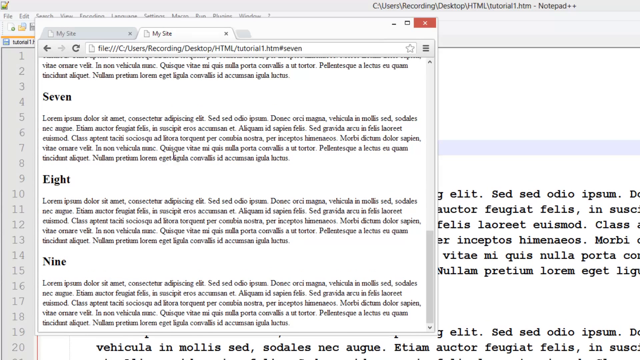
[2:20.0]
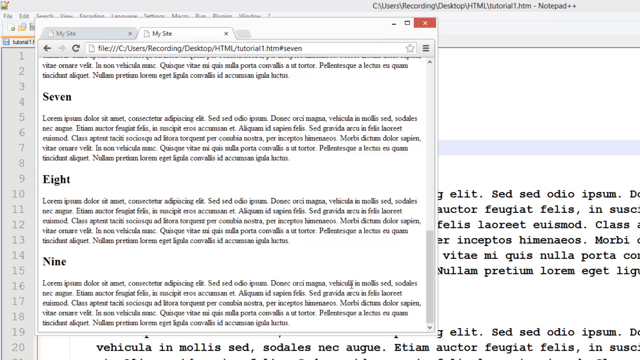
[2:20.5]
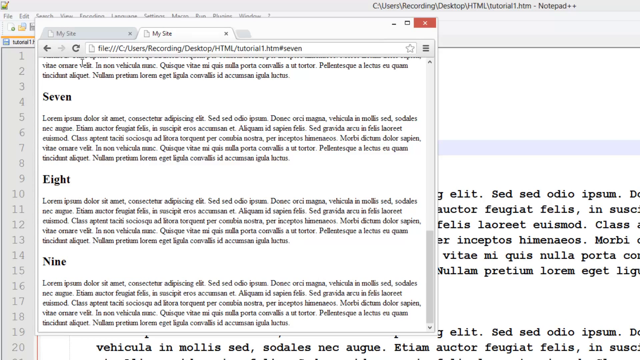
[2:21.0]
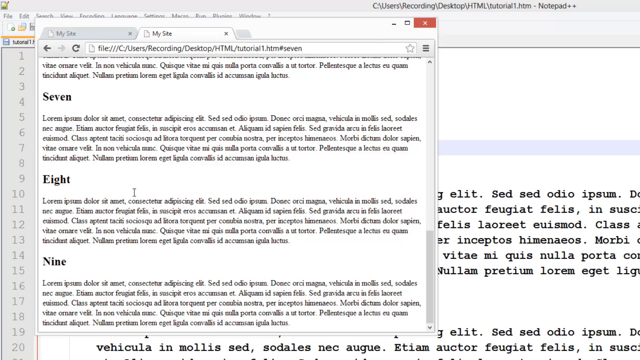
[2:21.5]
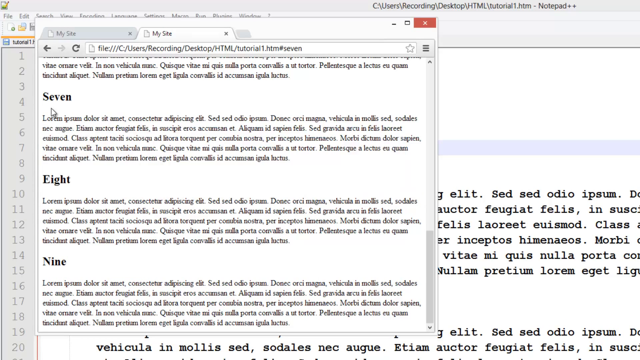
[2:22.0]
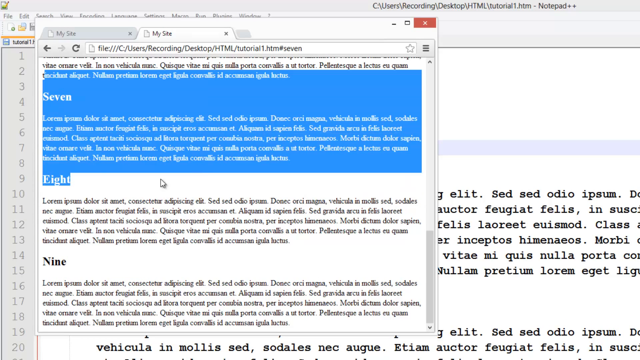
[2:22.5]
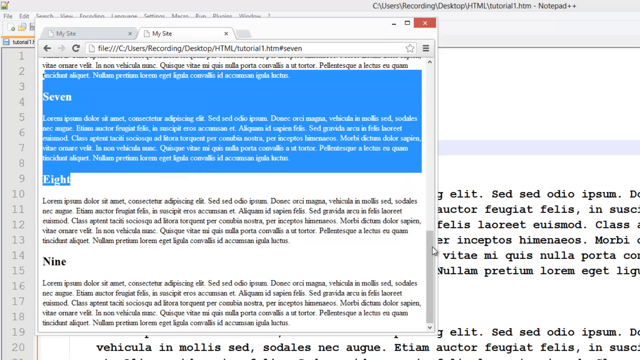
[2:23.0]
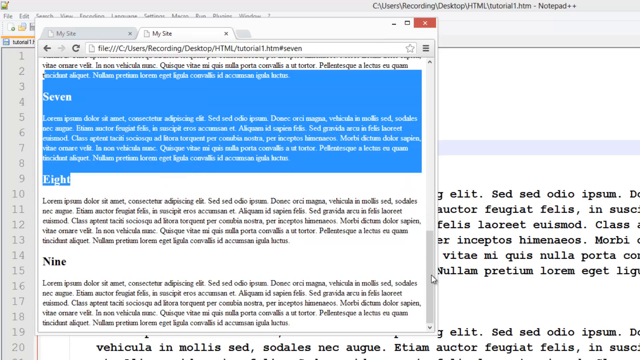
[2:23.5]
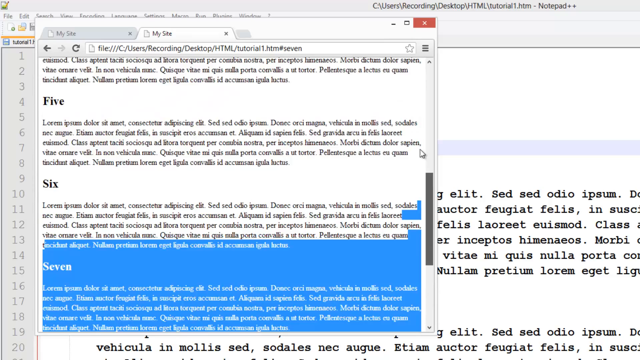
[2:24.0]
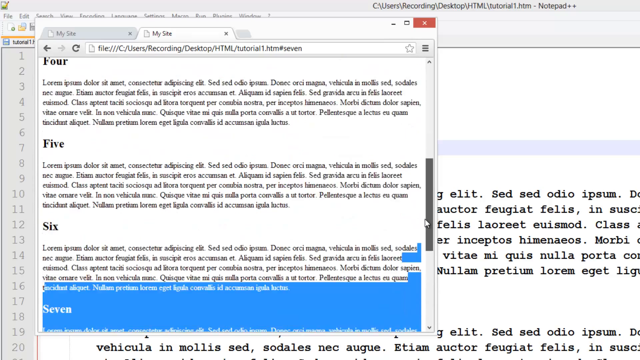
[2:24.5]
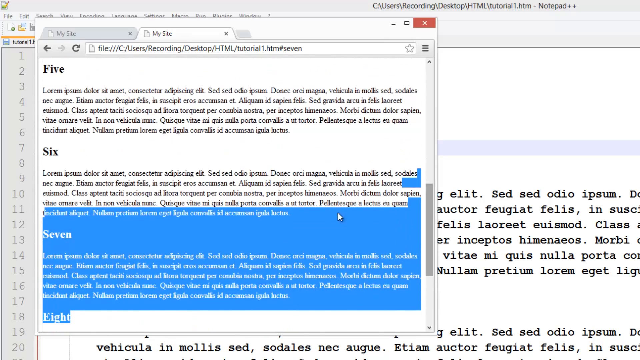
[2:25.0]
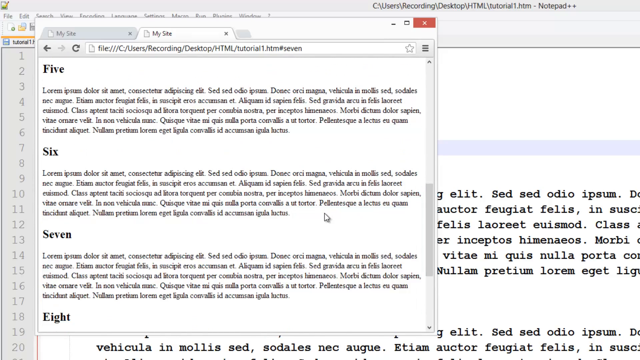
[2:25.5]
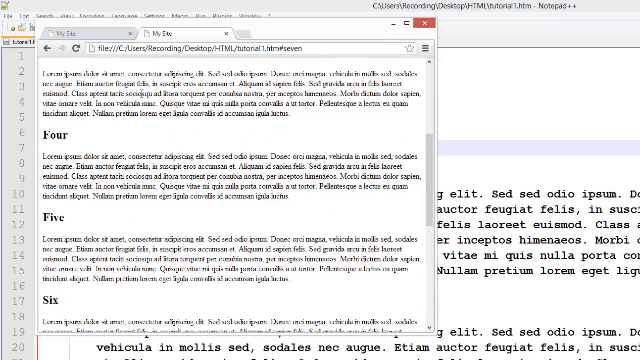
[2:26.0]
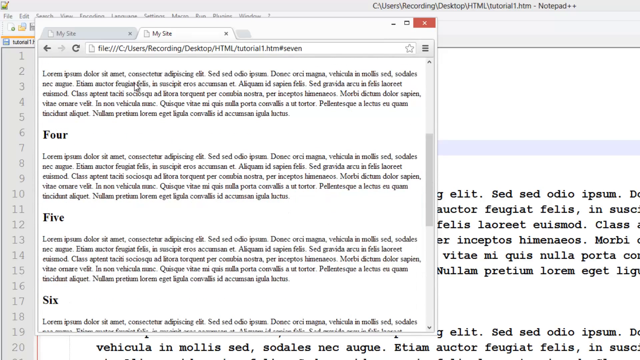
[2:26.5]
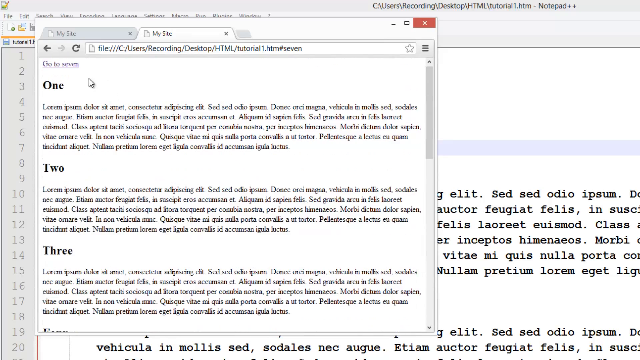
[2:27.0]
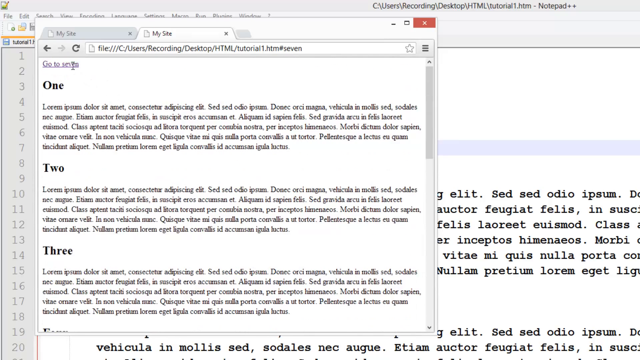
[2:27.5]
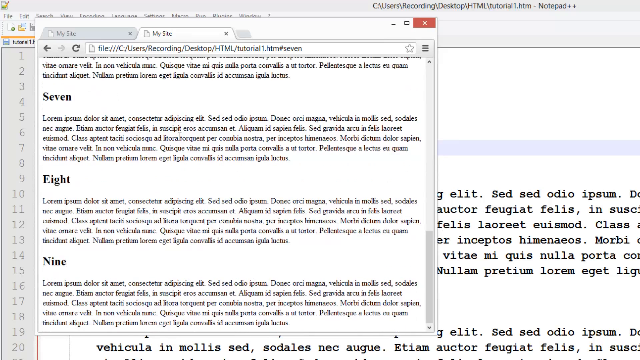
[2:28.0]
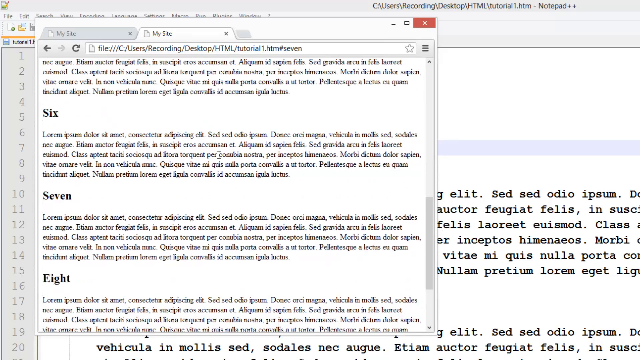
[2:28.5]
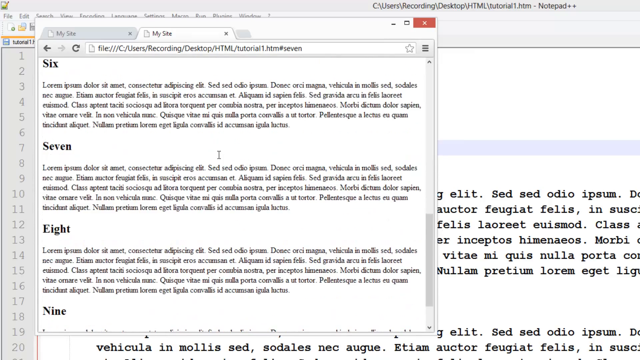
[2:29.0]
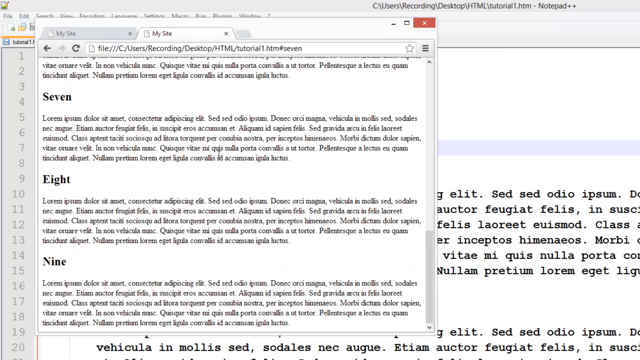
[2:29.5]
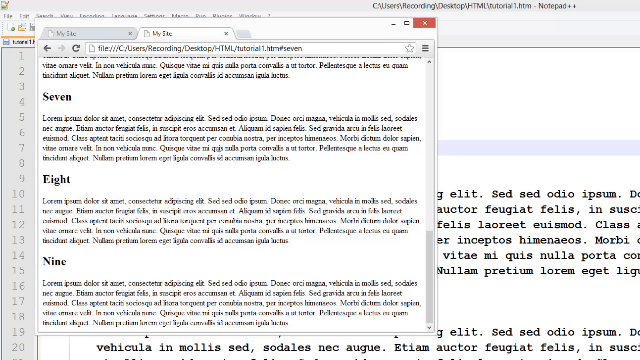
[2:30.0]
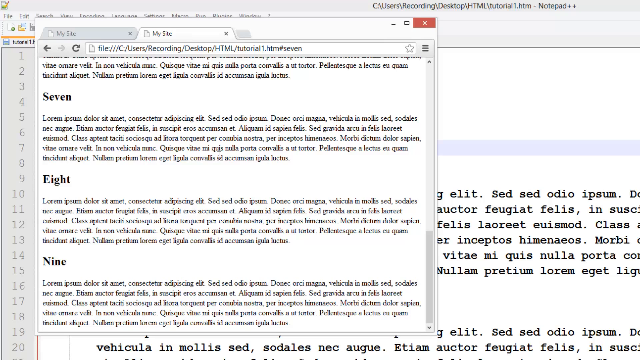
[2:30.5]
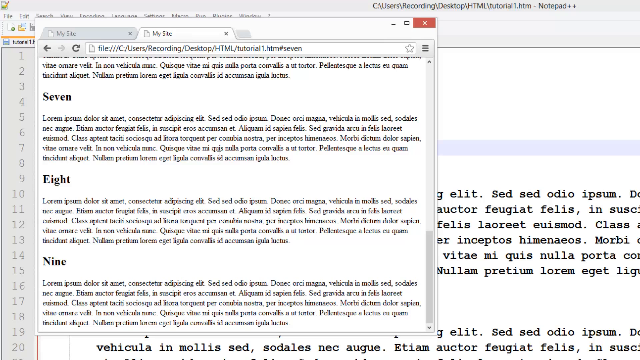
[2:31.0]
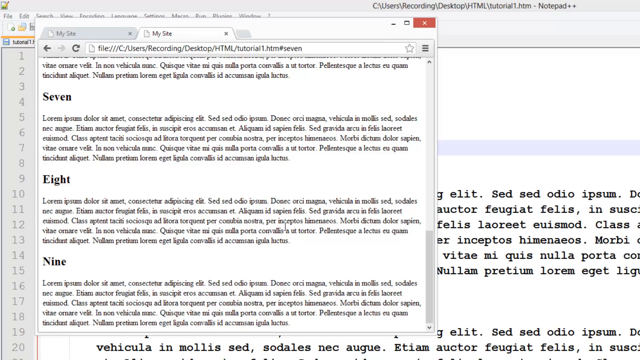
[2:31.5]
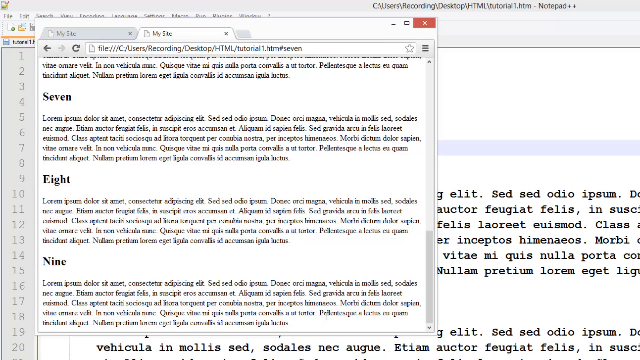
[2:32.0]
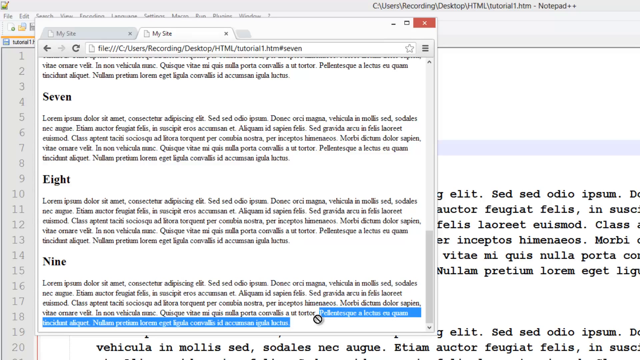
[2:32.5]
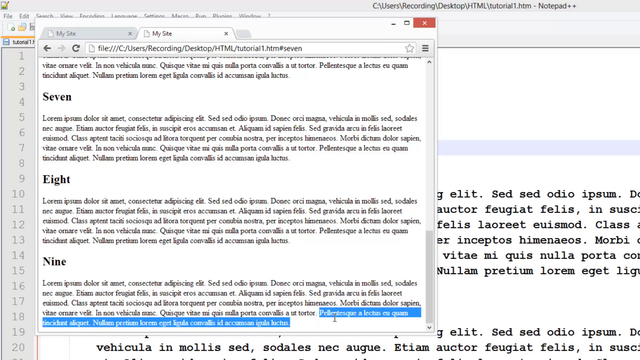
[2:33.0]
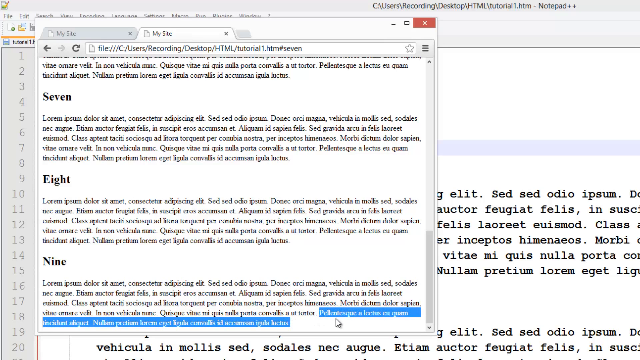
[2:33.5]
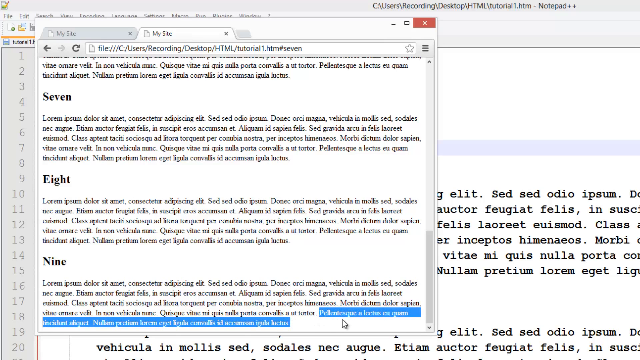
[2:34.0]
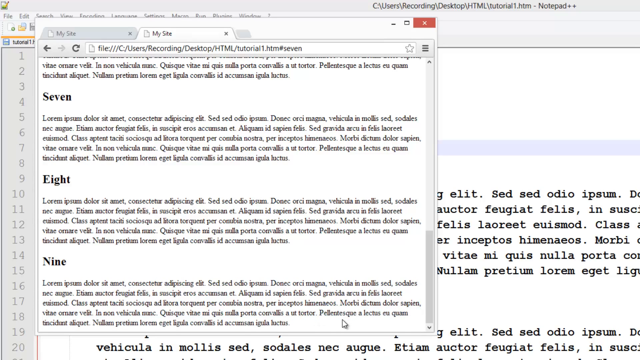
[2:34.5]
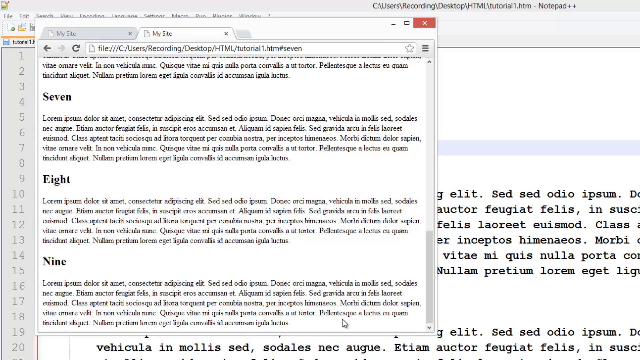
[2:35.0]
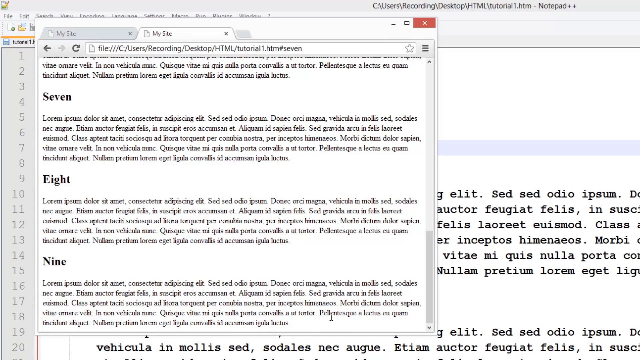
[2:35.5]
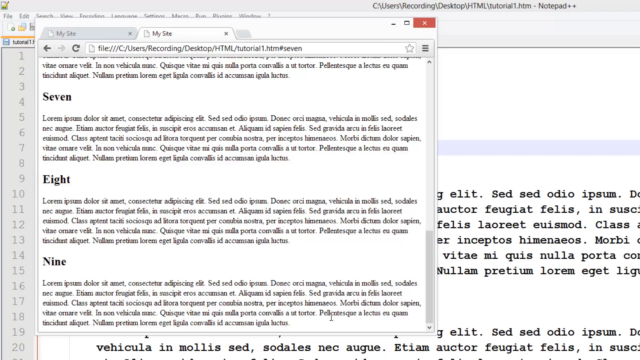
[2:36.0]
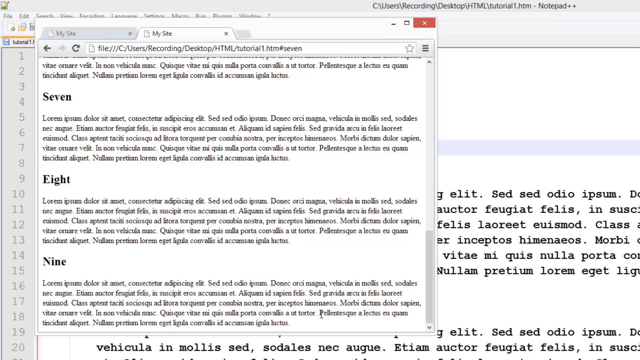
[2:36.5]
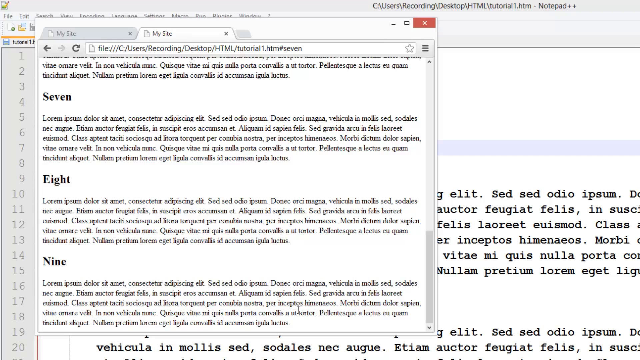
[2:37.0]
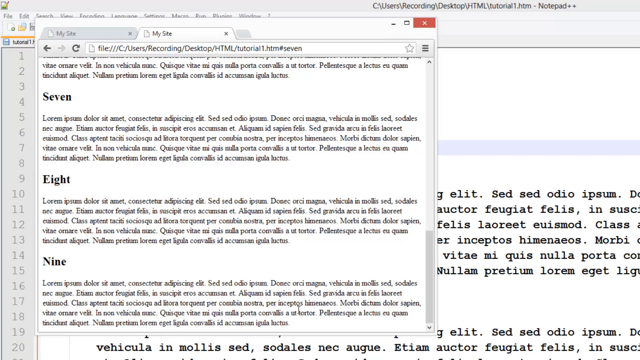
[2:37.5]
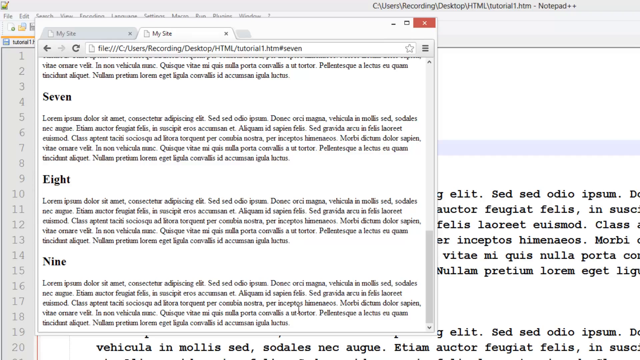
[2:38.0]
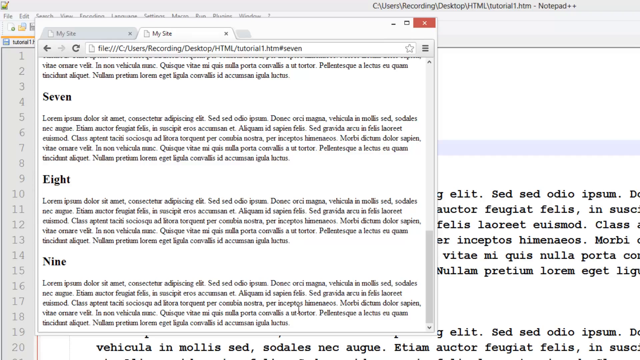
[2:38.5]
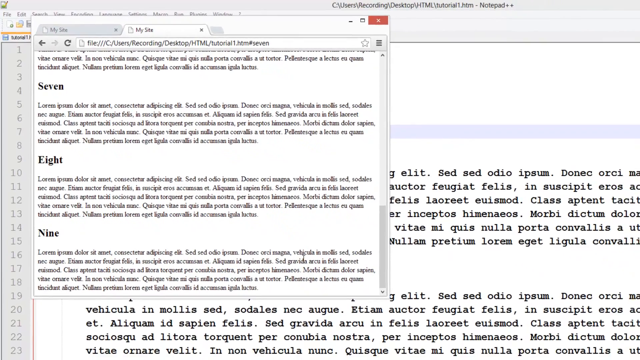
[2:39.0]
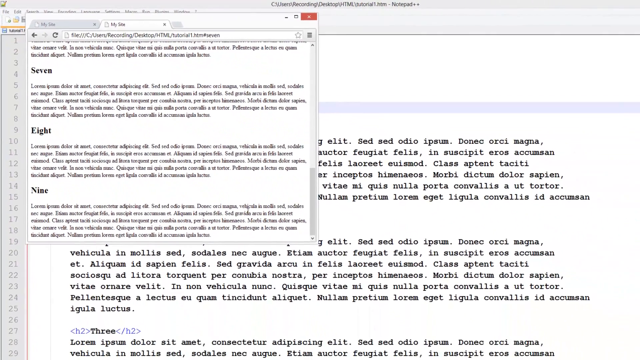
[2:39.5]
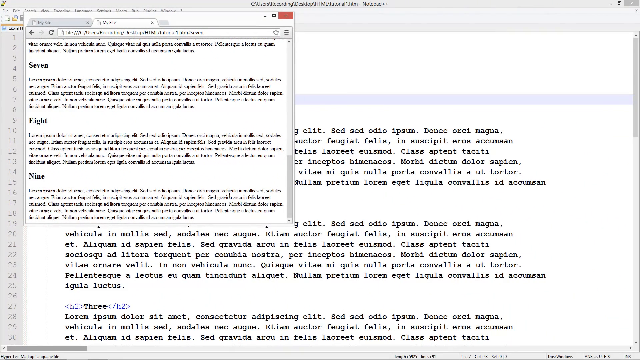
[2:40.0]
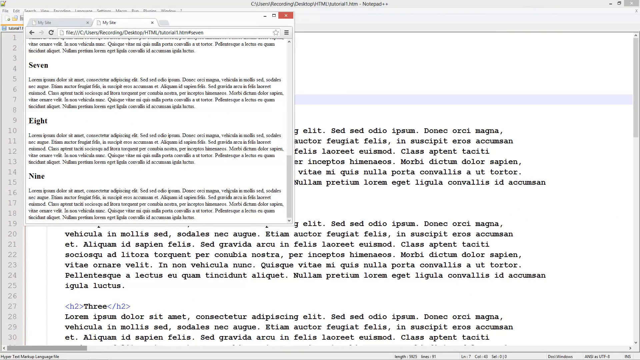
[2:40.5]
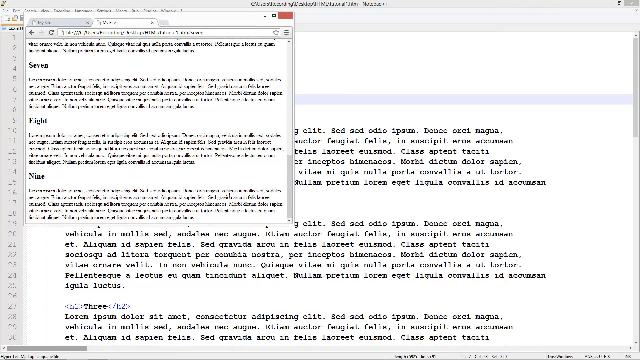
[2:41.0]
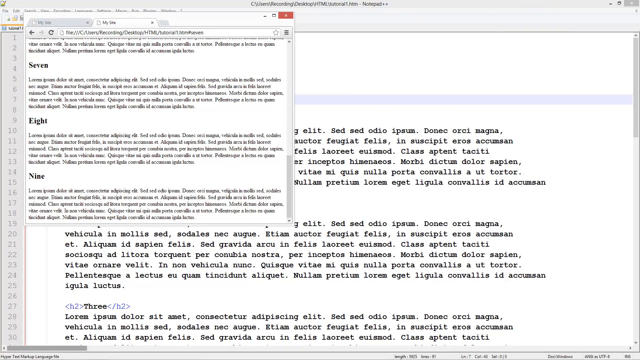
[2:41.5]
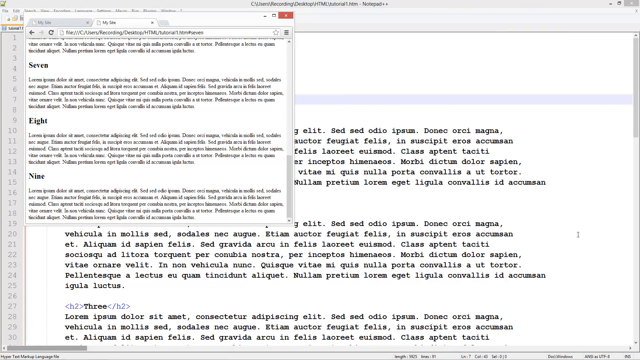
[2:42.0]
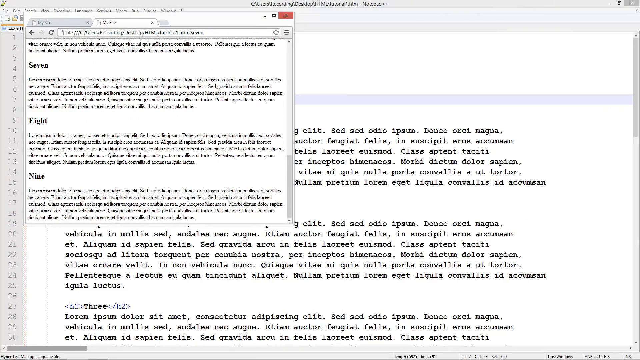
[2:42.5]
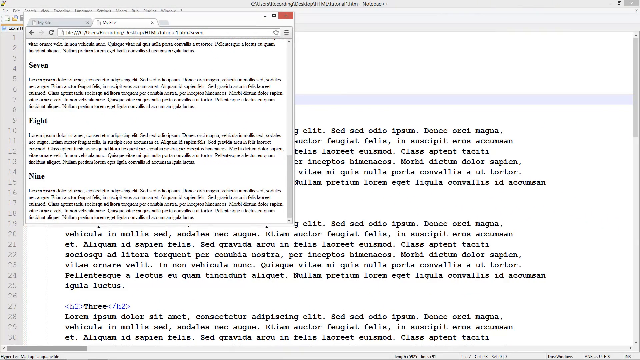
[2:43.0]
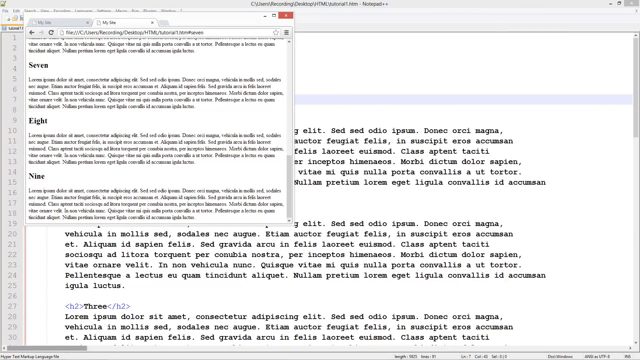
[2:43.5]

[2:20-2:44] A pop-up appears with text that seems to start with "my" followed by a word with an s, maybe "my size" or "my side." It shows seven followed by "lorem" template text running about five lines, then some space, then eight in bold with what seems to be the same paragraph ending at the same spot, then space, then nine with the same paragraph. The person starts to highlight the line above seven, which is apparently part of paragraph six, then scrolls back up, showing it is part of six. They then click what may be a back or player symbol, words in section nine are highlighted, and the view appears zoomed out.